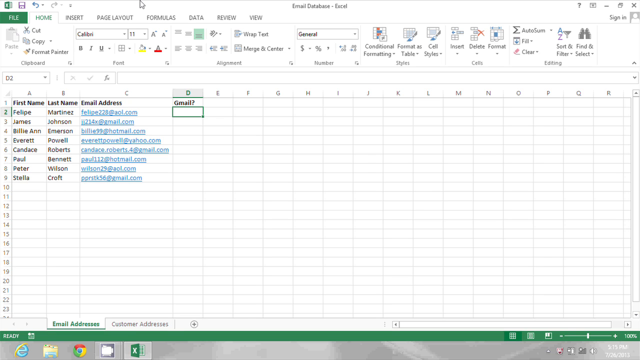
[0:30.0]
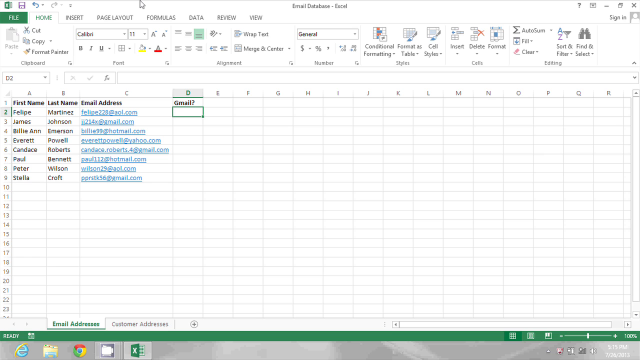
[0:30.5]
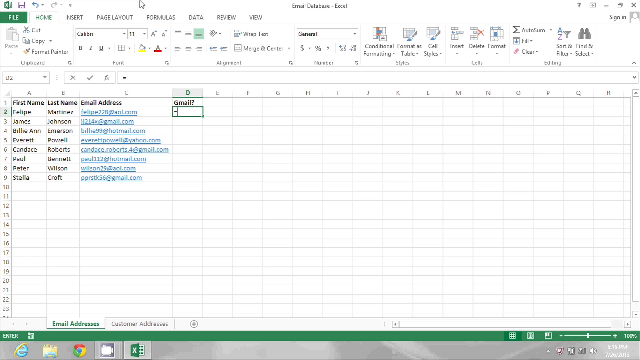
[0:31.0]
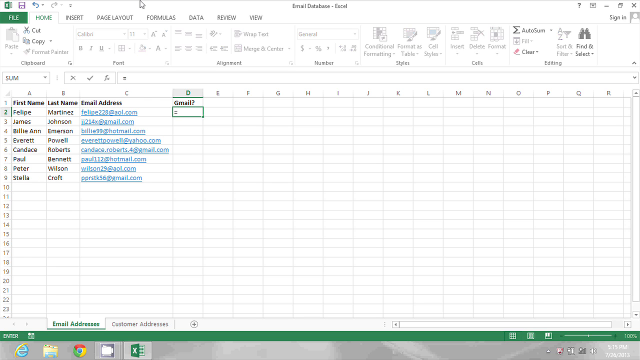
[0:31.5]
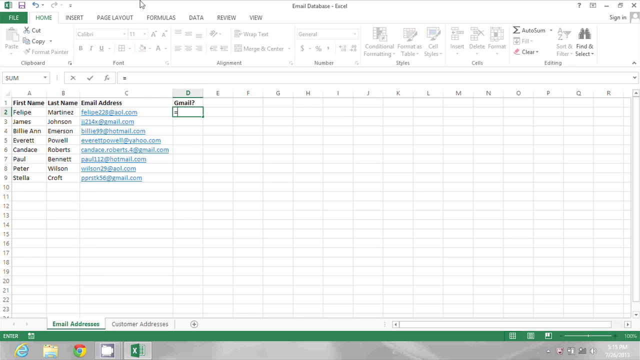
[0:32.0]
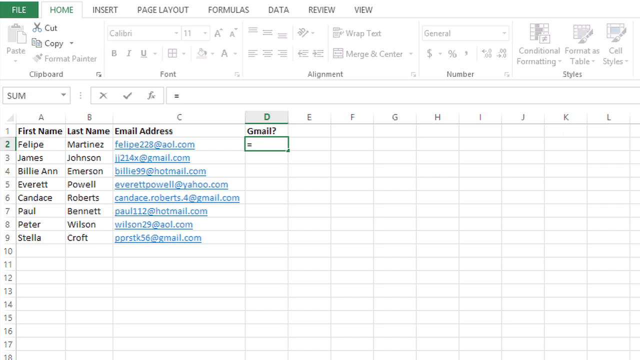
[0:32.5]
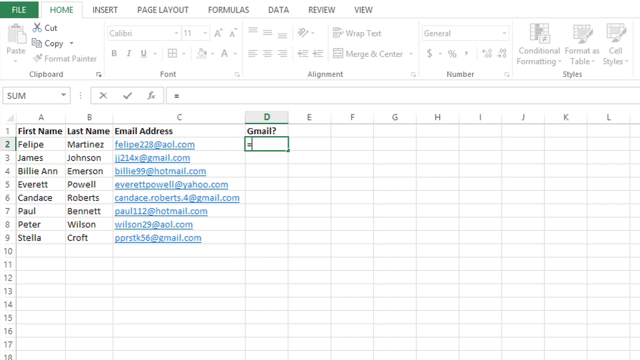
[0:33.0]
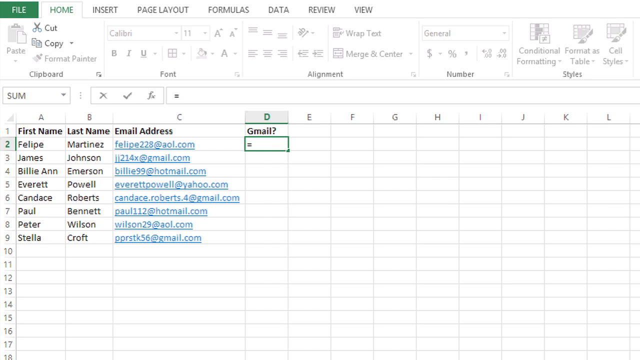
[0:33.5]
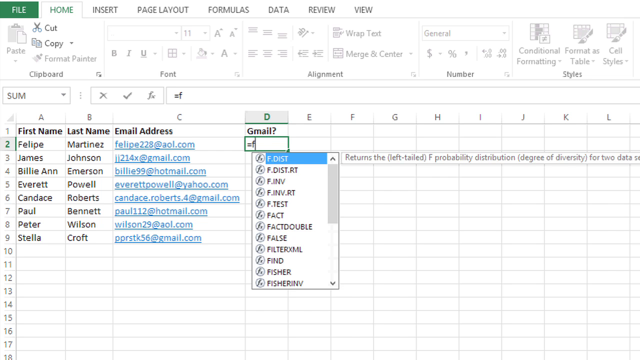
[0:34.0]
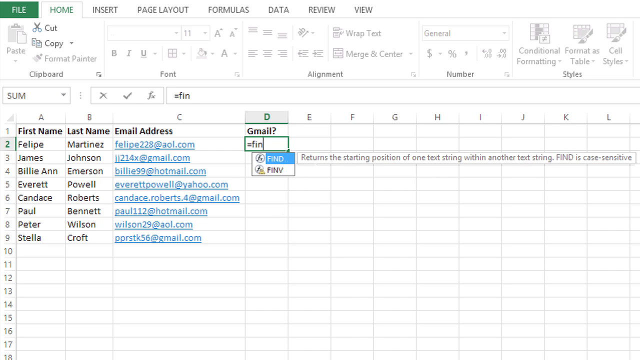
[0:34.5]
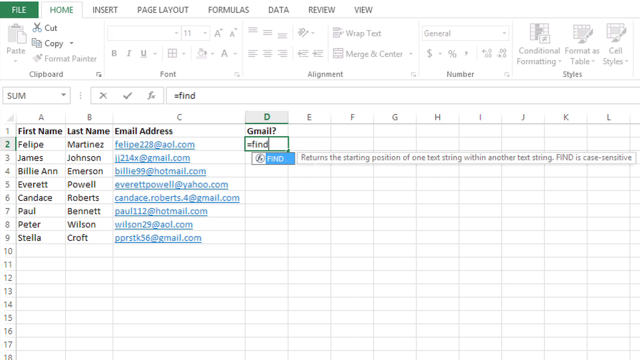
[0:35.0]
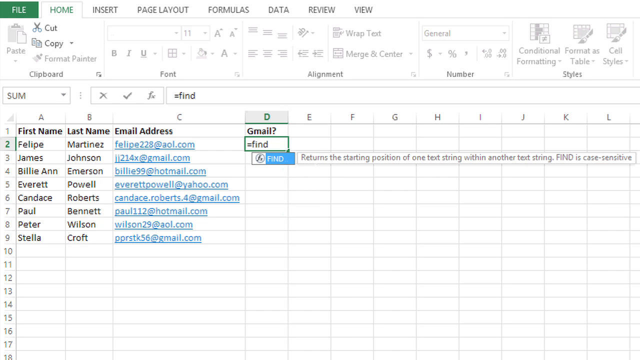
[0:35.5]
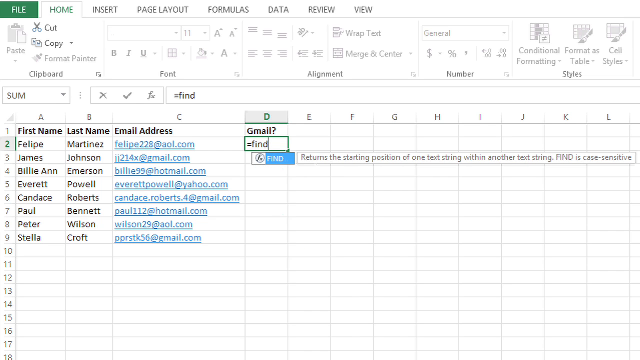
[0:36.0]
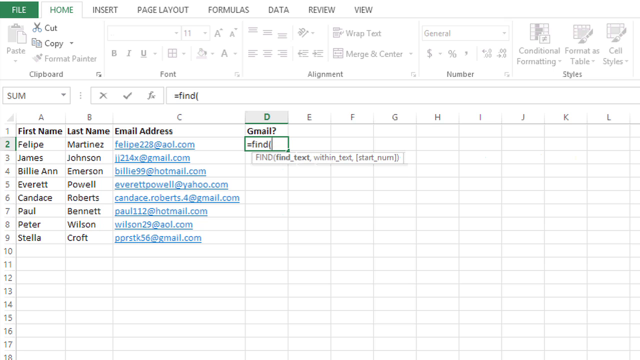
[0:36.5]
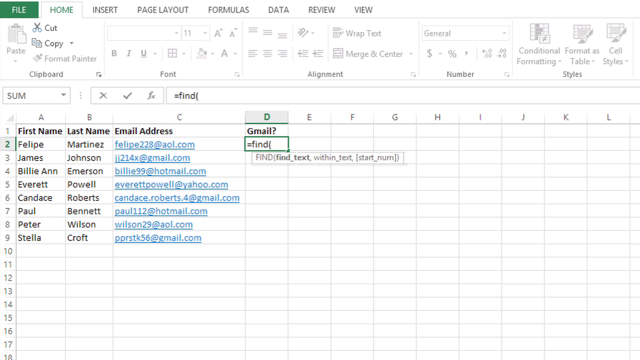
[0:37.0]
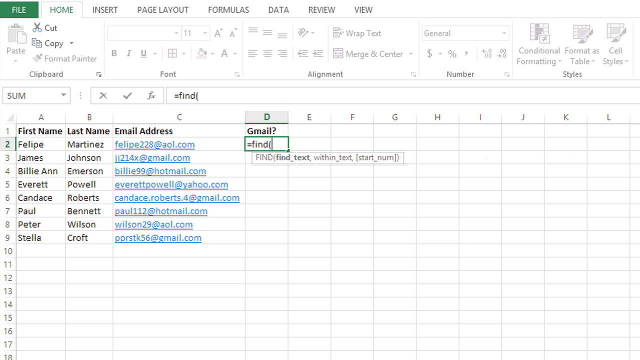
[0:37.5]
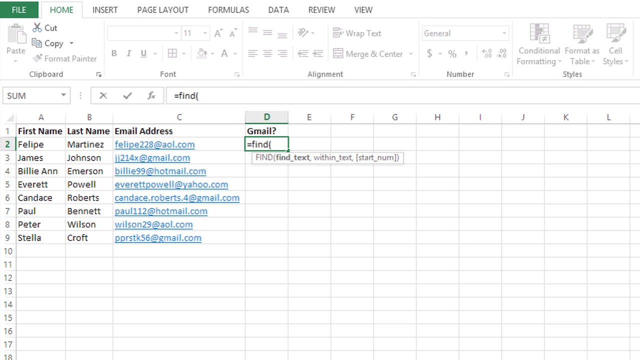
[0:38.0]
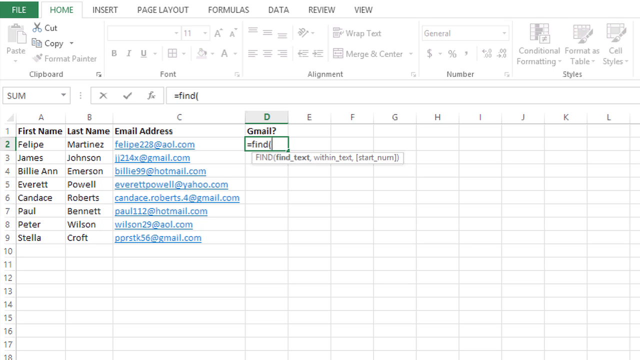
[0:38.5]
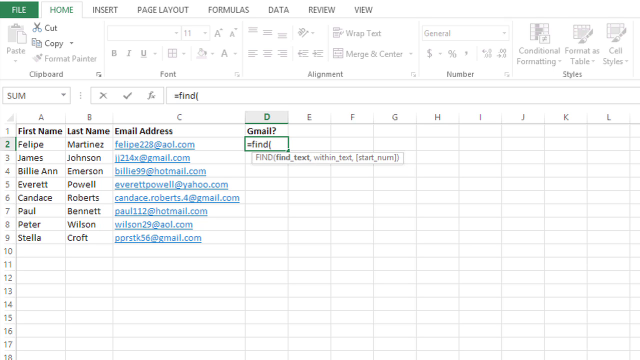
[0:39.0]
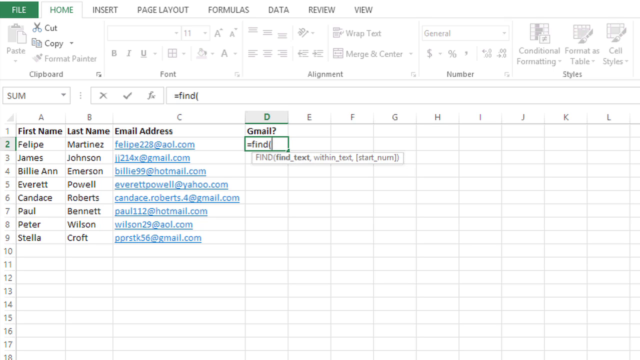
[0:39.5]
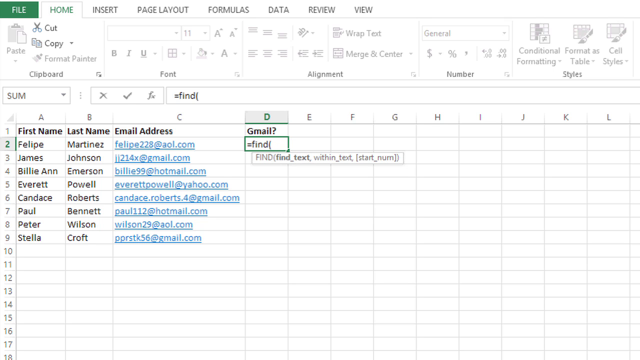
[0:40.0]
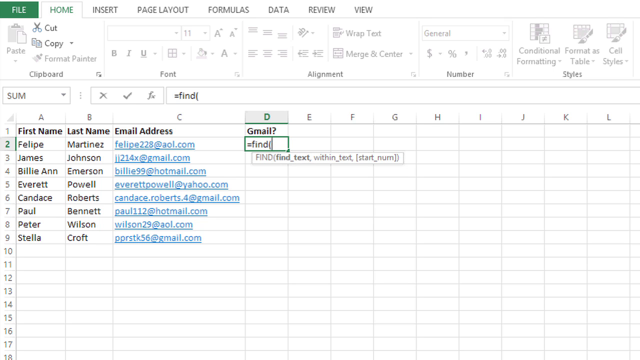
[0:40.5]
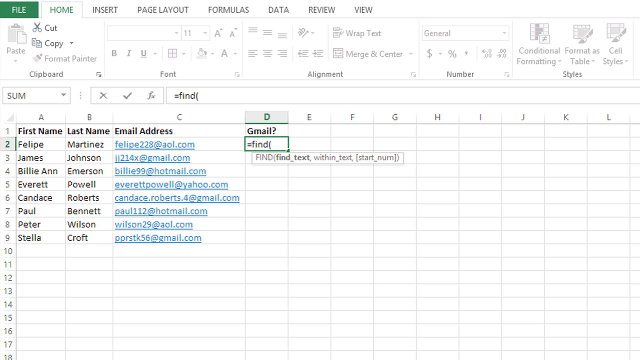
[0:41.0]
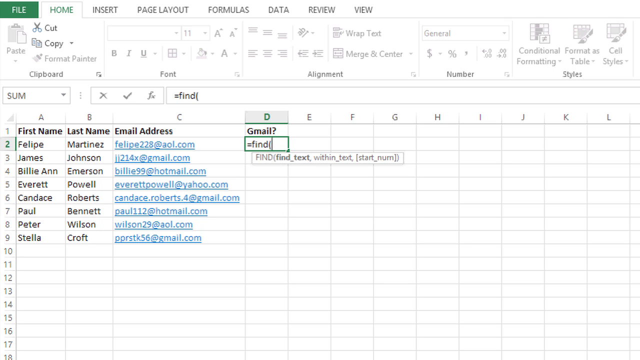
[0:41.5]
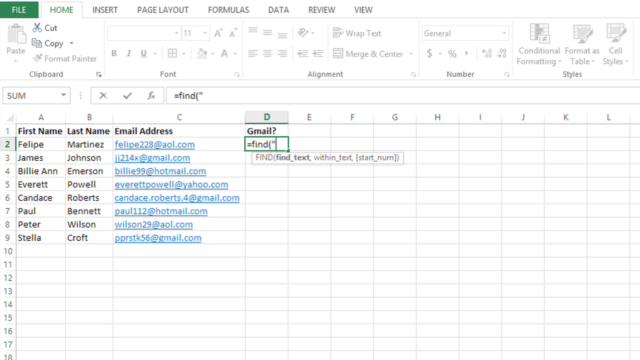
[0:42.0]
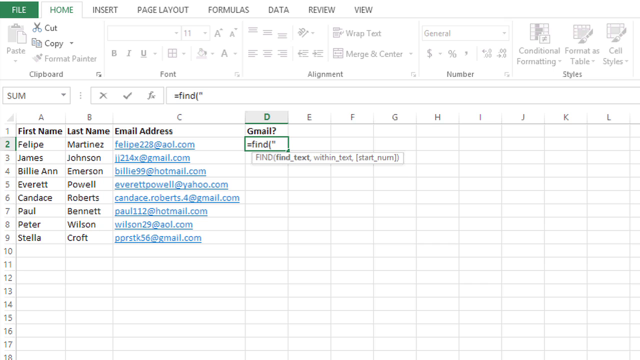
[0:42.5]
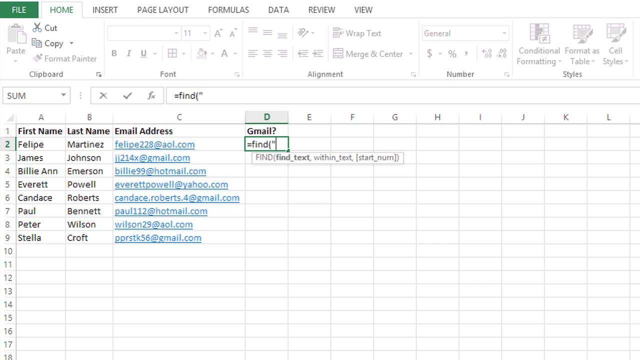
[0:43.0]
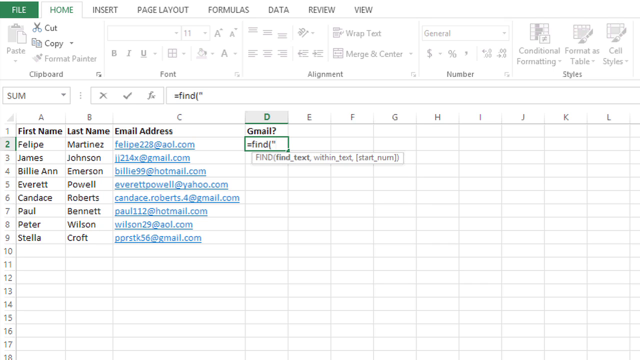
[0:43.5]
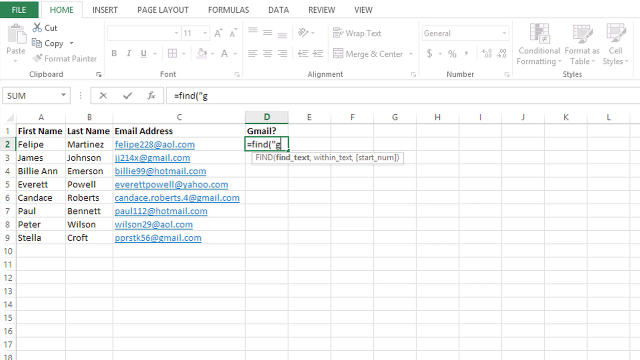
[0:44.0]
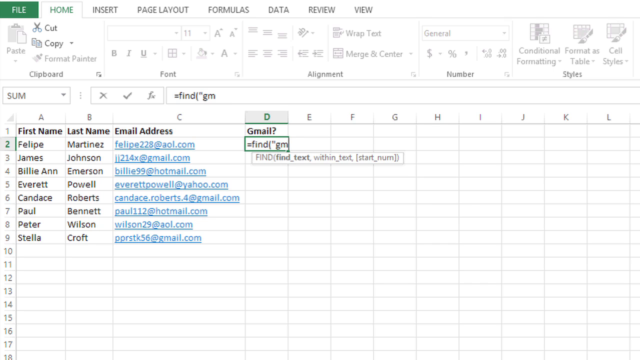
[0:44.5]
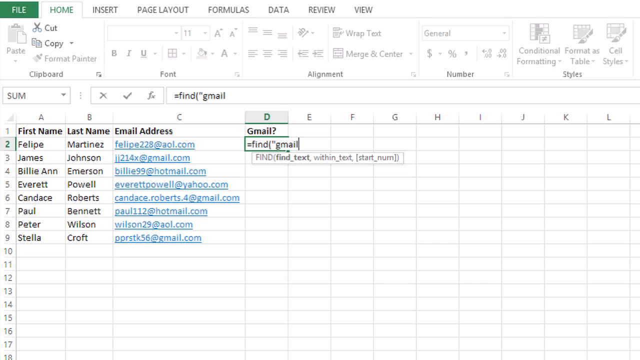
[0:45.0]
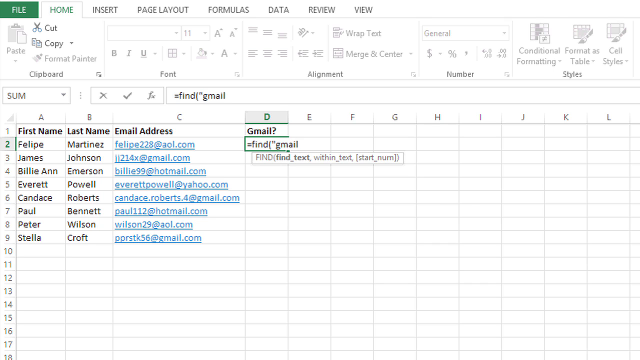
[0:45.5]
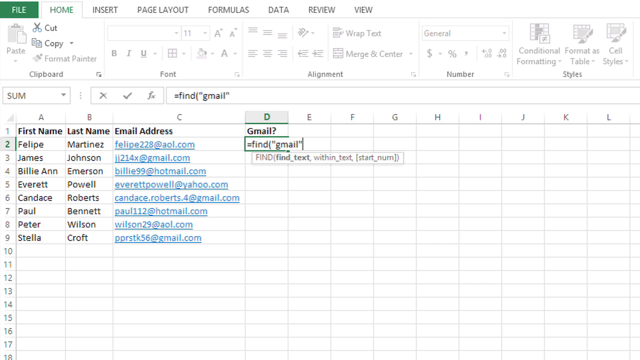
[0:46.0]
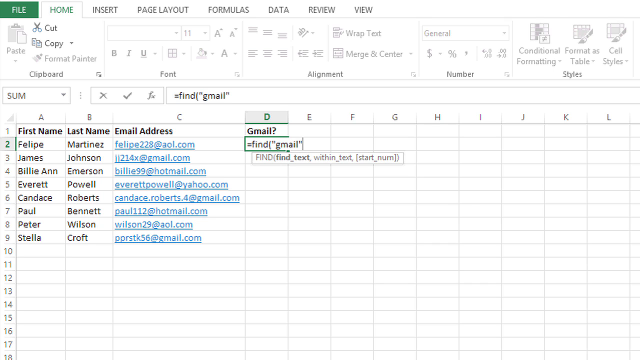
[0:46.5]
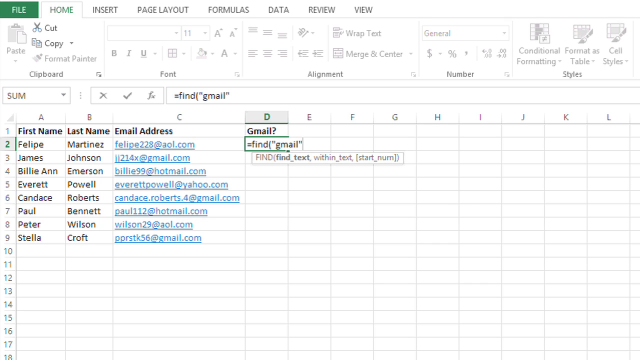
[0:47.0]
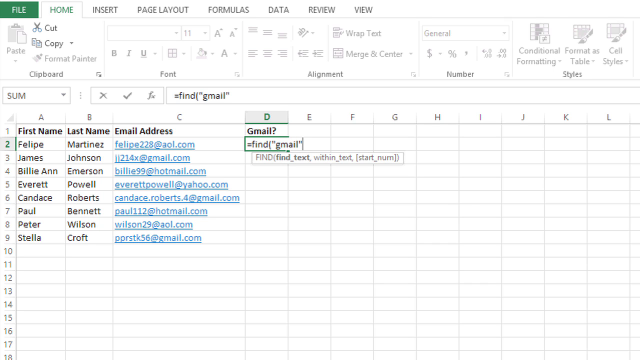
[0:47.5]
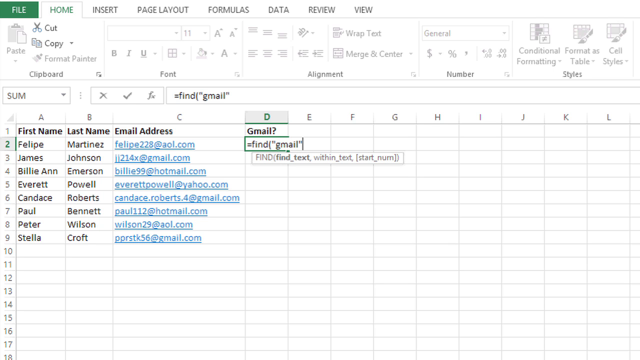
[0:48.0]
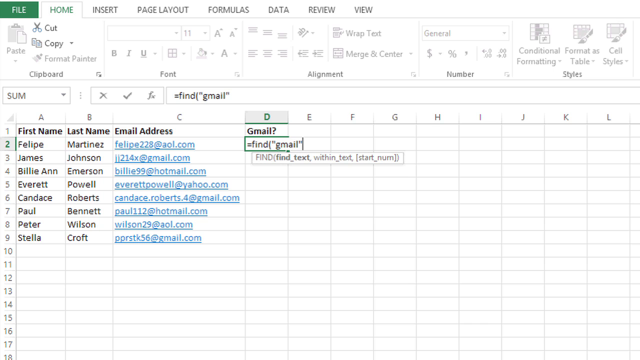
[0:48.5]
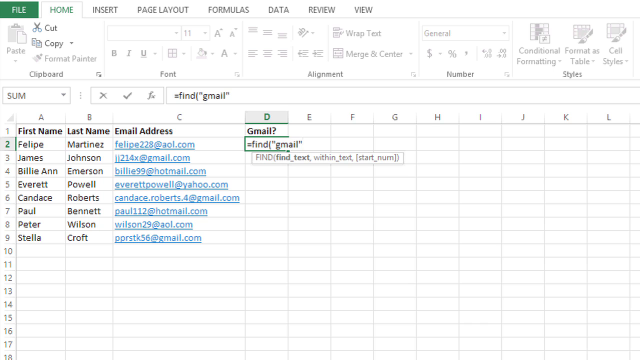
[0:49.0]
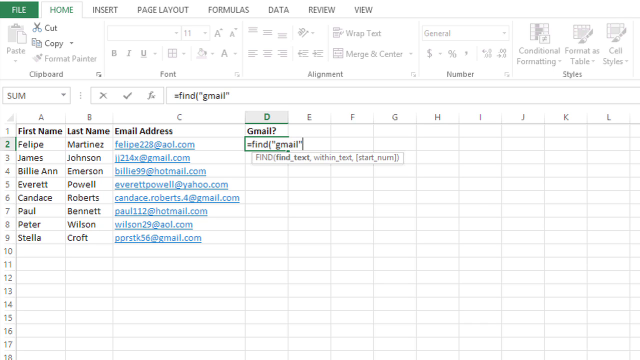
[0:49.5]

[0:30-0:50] An Excel document named "Email Database" is shown, with four columns, A through D, and nine rows. The columns are named First Name, Last Name, Email Address, and Gmail, with a question mark after the word Gmail, and information is filled into the rows under each column. The person is filling in more information under column D, next to the name Felipe Martinez. They type in a find command, "=find Gmail", searching for Felipe Martinez's Gmail address in order to fill it in under column D.